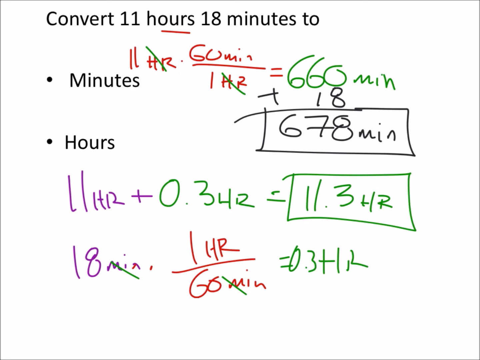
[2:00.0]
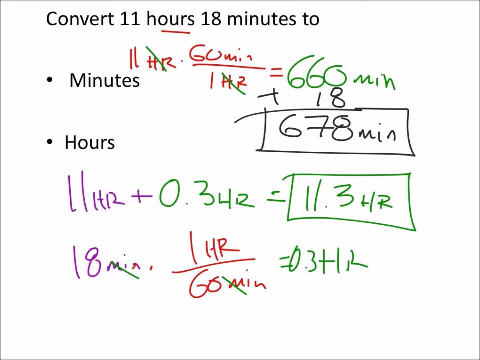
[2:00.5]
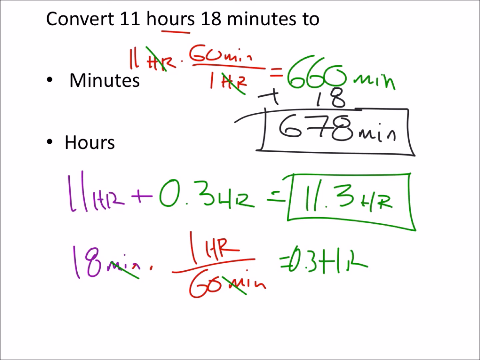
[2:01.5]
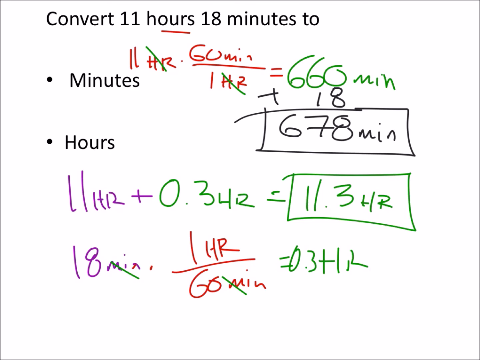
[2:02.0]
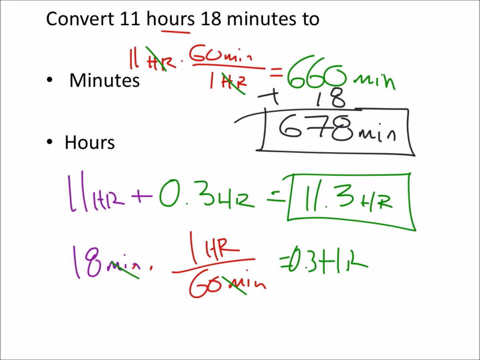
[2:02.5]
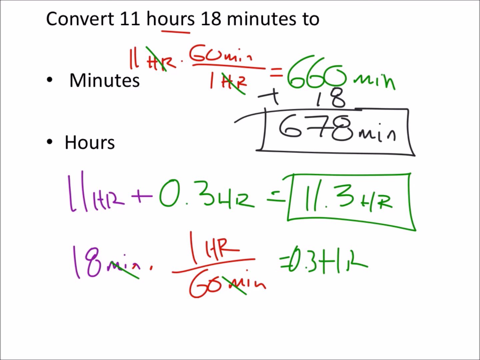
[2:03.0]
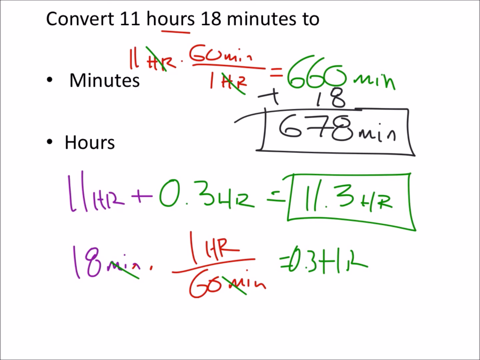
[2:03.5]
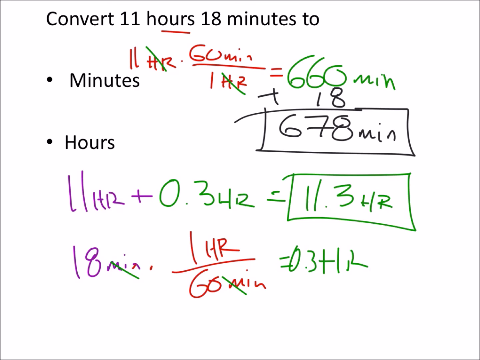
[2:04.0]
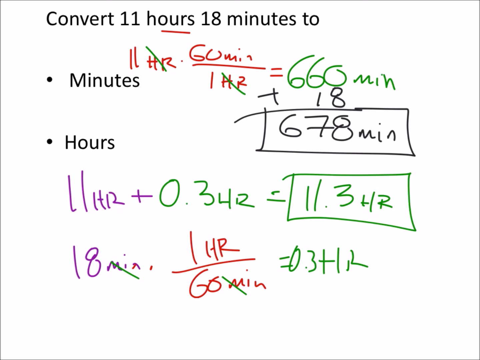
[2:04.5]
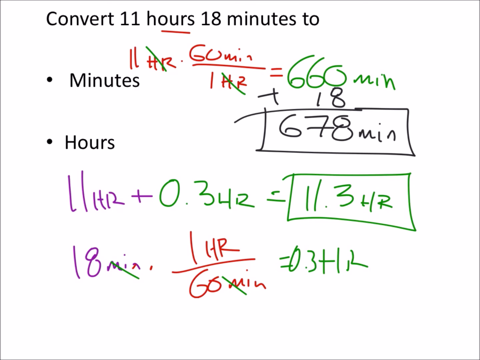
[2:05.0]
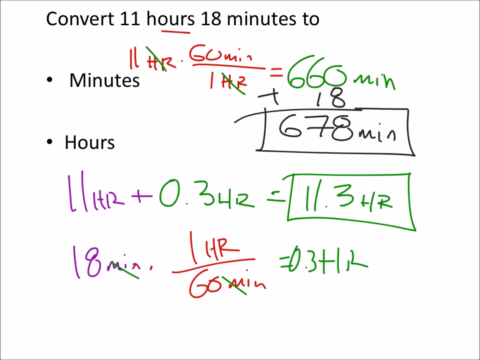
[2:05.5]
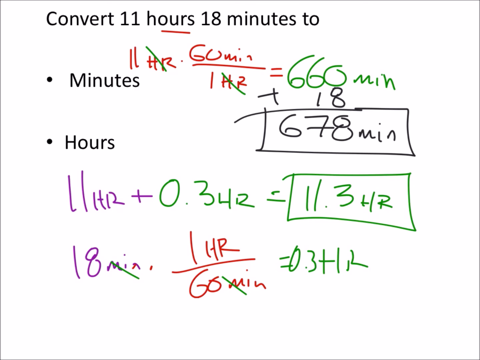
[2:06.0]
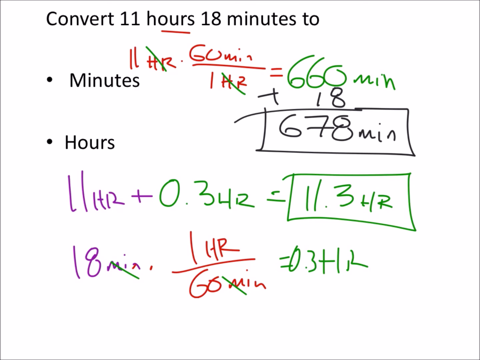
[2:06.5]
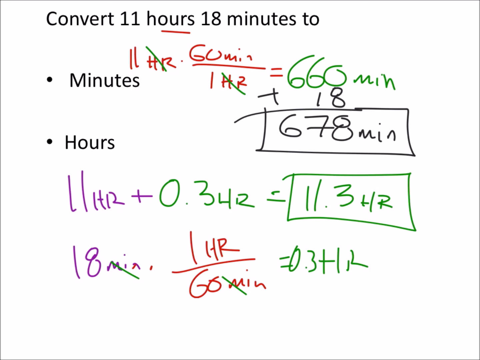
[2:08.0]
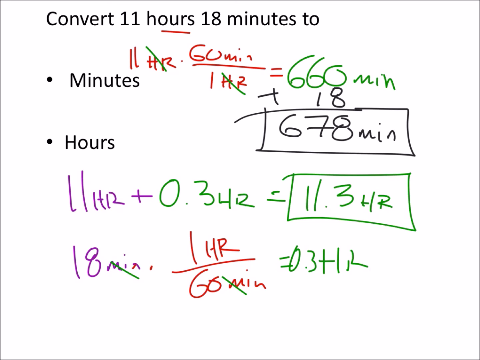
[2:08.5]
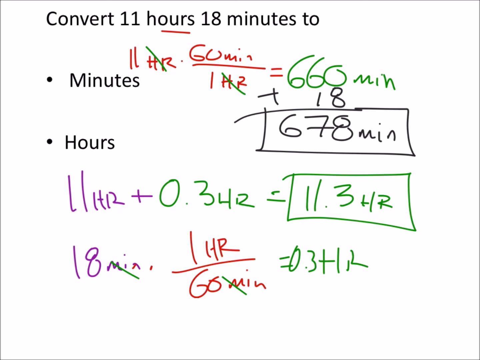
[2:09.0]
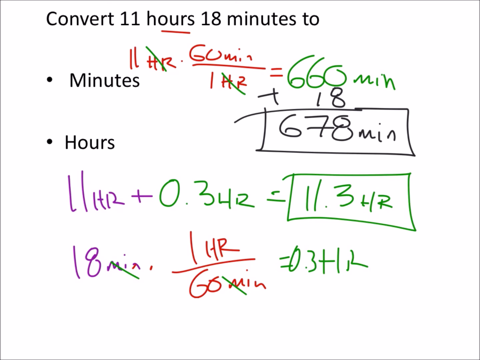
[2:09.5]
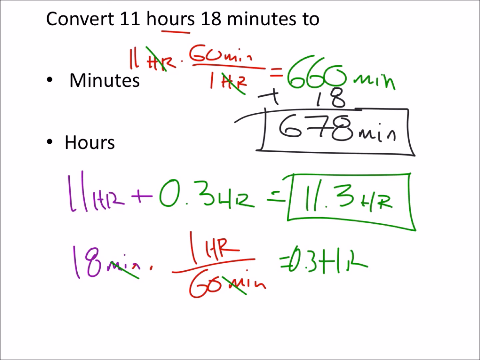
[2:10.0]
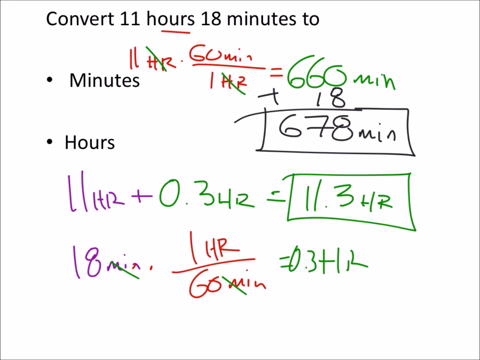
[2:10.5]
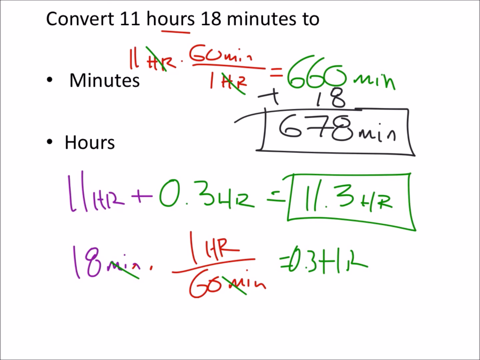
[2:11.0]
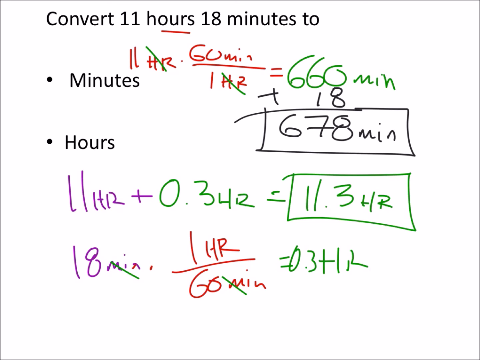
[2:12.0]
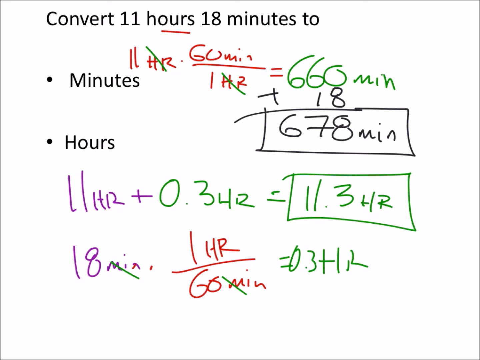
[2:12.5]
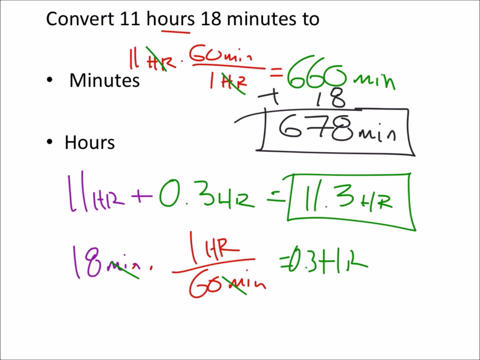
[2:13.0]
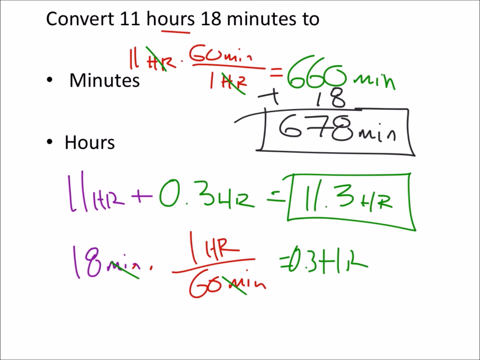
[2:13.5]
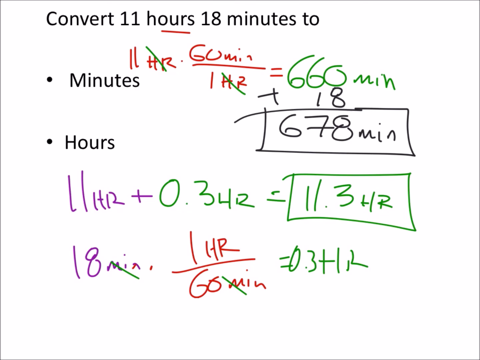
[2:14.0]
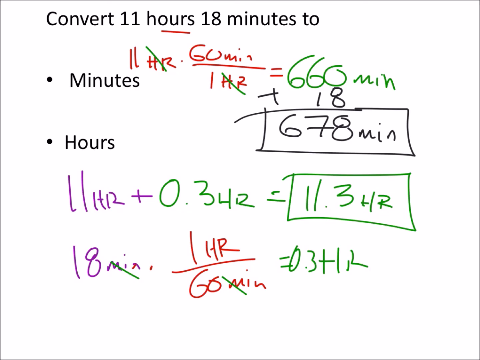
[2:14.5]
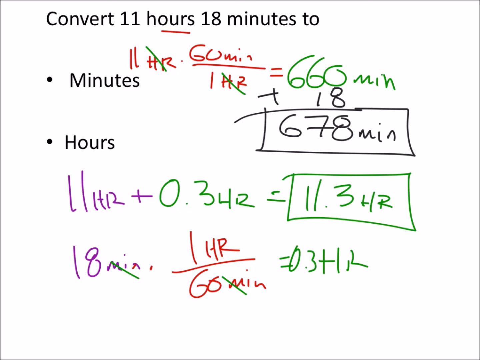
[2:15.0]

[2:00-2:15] A math problem asks to convert 11 hours 18 minutes to minutes and hours. Next to a bullet point labeled "minutes", the problem is written out in handwriting in different colors: brown marker reads "11 HR times 60 min over 1 HR equals", then green marker reads "660 min". The "HR" labels have a green diagonal line through them. Under "660 min", black marker reads "plus 18", with the equal line underneath and then the answer "678 min", which has a box drawn around it. Below is a bullet point labeled "hours"; under it, purple marker reads "11 HR plus", then green marker reads "0.3 HR equals 11.3 HR", with a box around "11.3 HR". On the line below, purple marker reads "18 min", brown marker reads "times 1 HR over 60 min", and green marker reads "equals 0.3 HR". A diagonal green slash line goes through both "min" labels, next to 18 and next to 60. The final answers shown are 678 minutes and 11.3 hours.